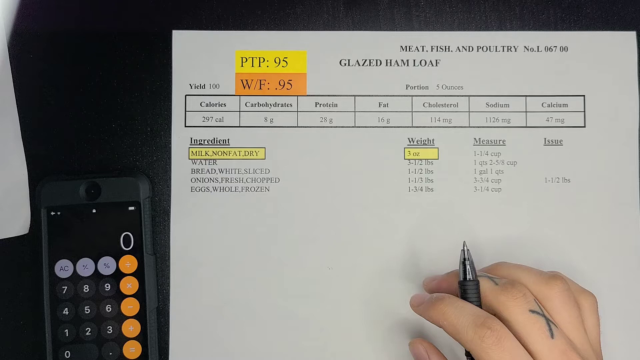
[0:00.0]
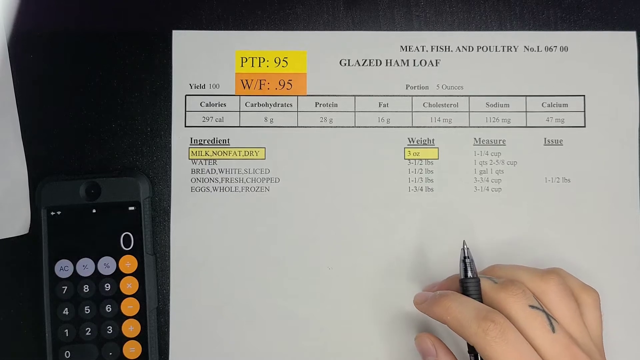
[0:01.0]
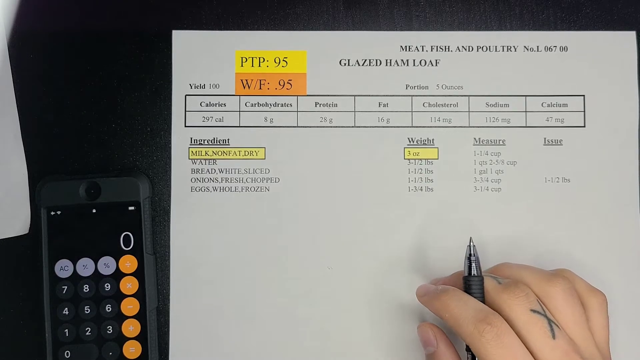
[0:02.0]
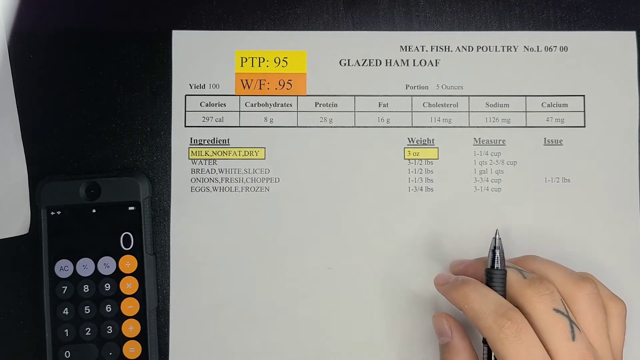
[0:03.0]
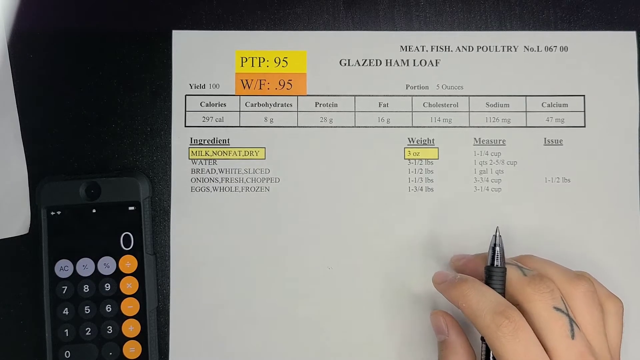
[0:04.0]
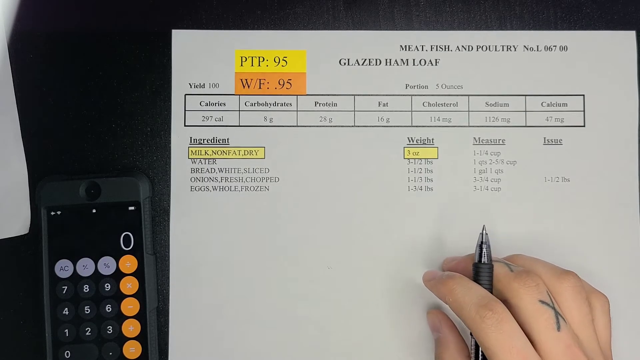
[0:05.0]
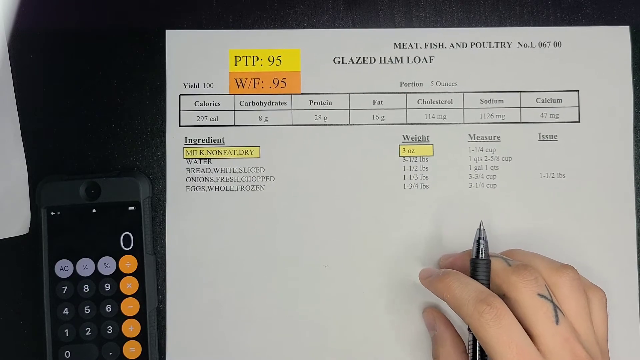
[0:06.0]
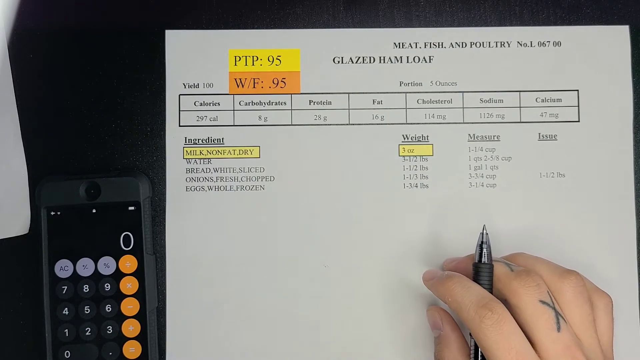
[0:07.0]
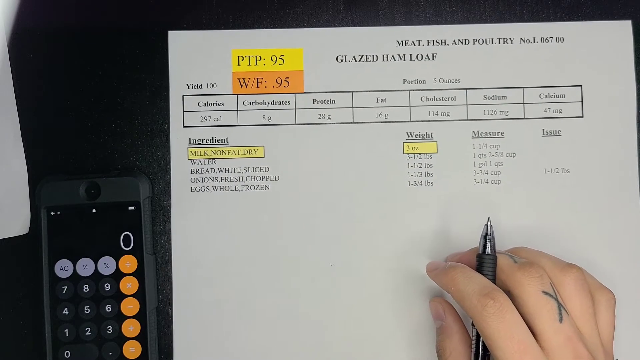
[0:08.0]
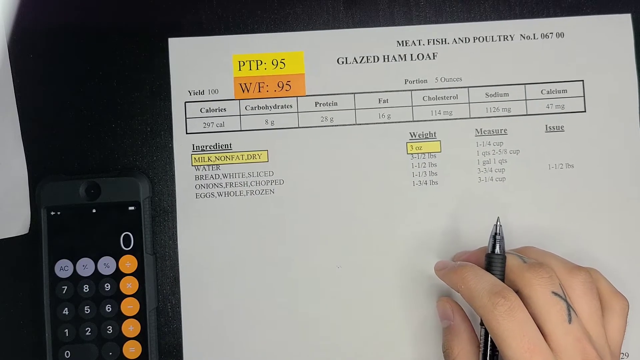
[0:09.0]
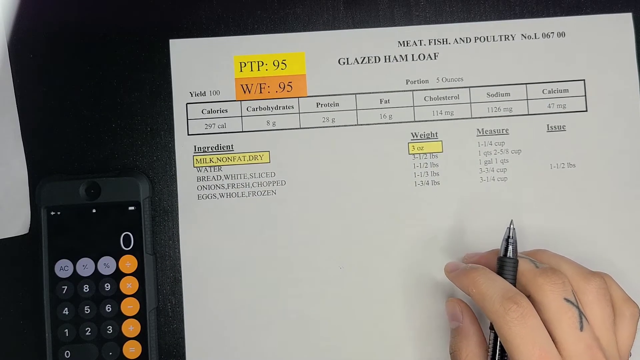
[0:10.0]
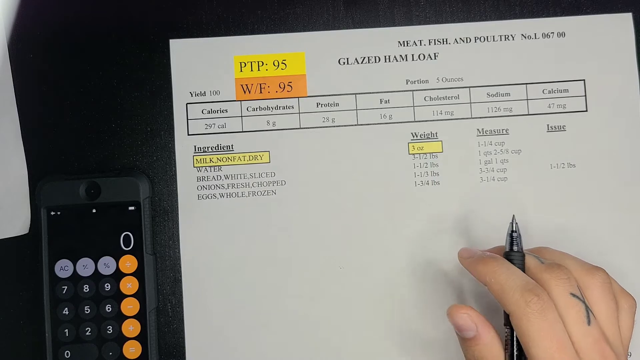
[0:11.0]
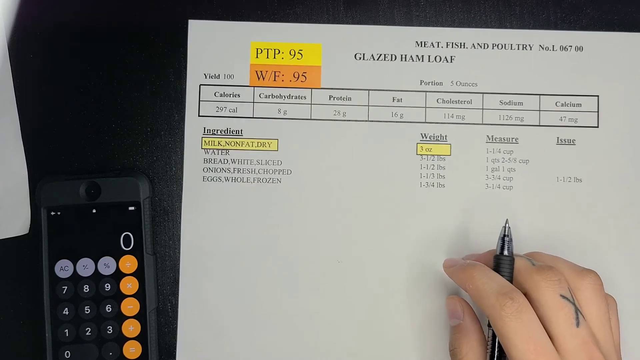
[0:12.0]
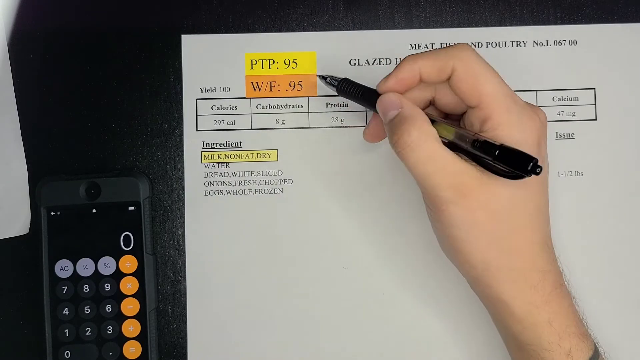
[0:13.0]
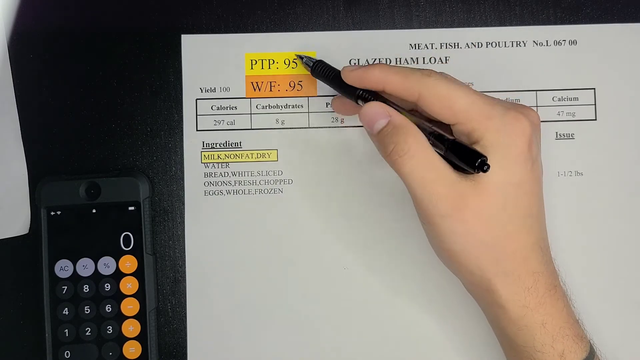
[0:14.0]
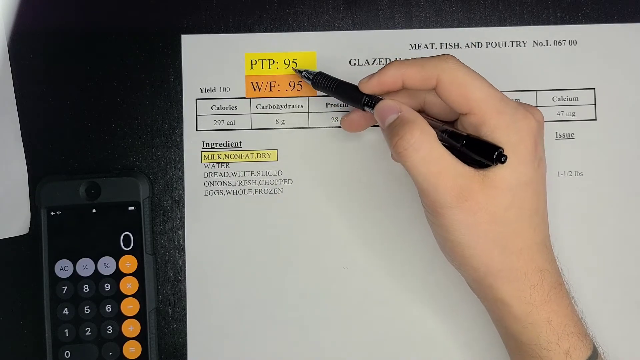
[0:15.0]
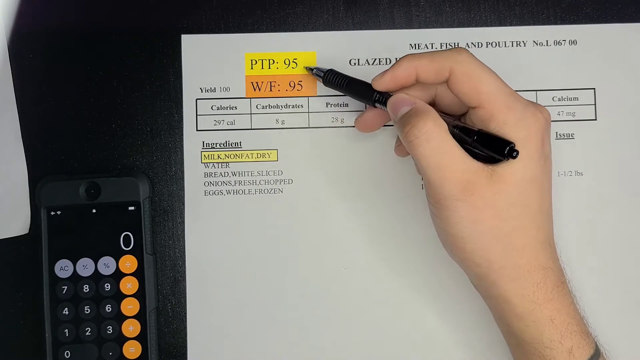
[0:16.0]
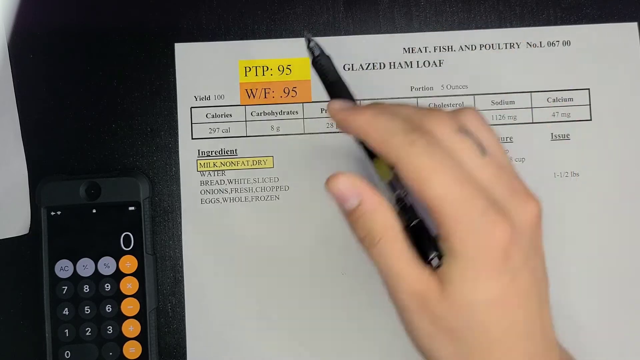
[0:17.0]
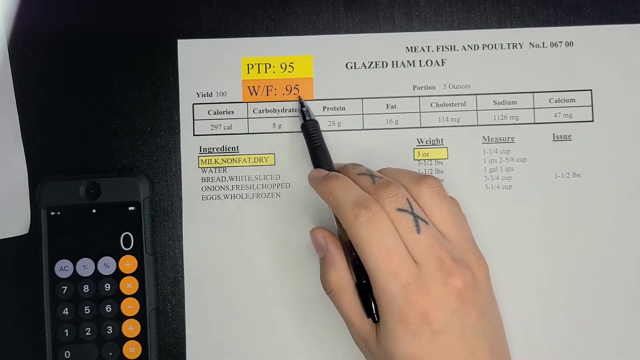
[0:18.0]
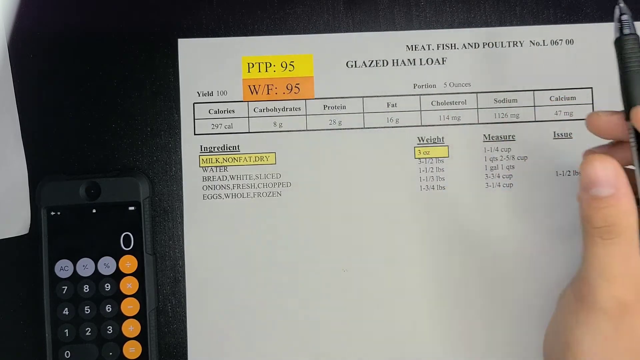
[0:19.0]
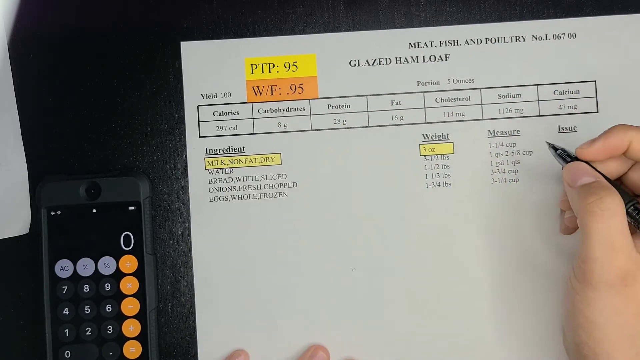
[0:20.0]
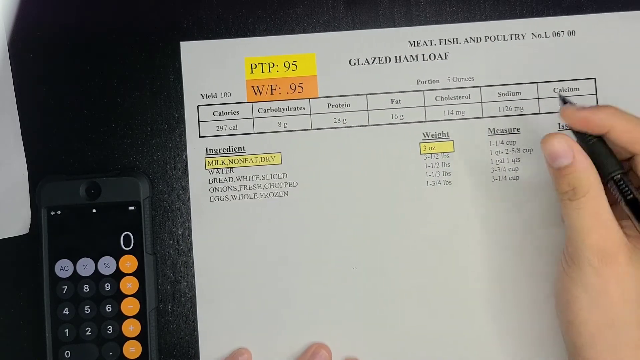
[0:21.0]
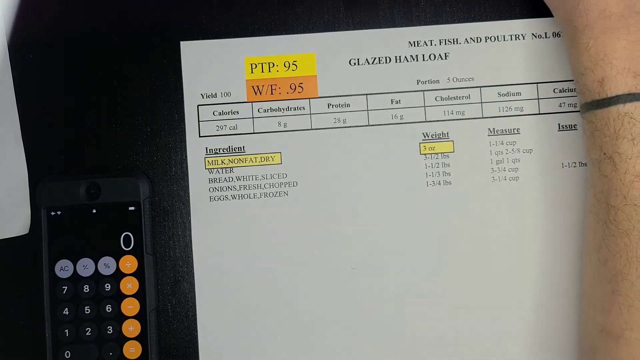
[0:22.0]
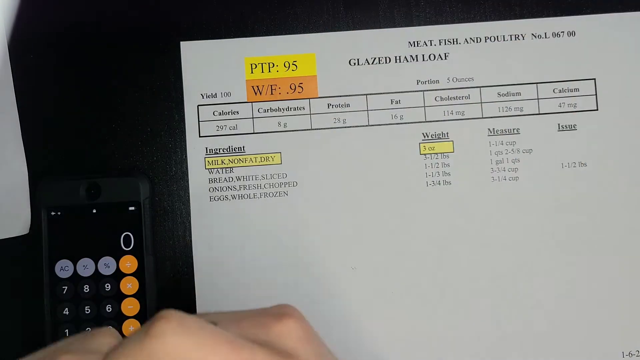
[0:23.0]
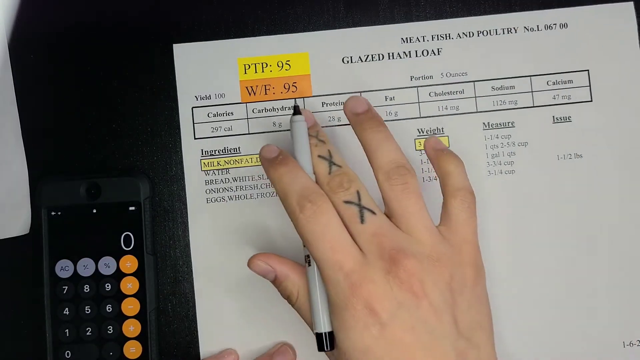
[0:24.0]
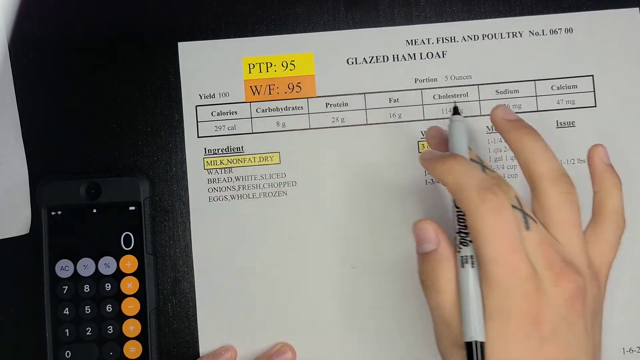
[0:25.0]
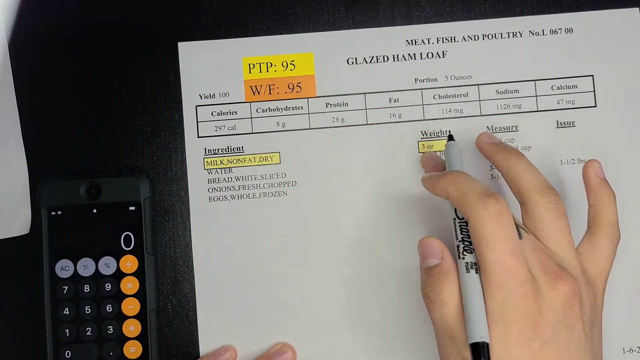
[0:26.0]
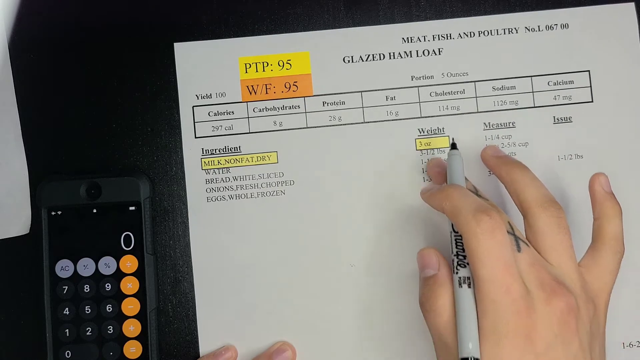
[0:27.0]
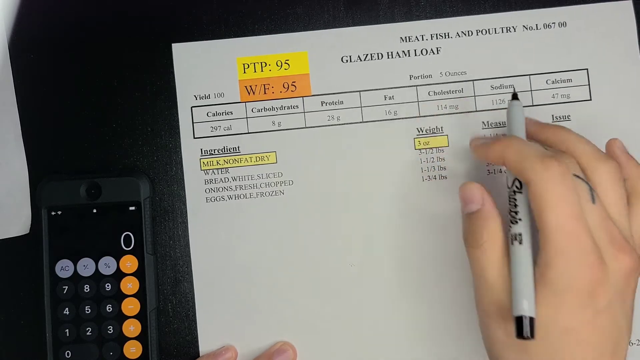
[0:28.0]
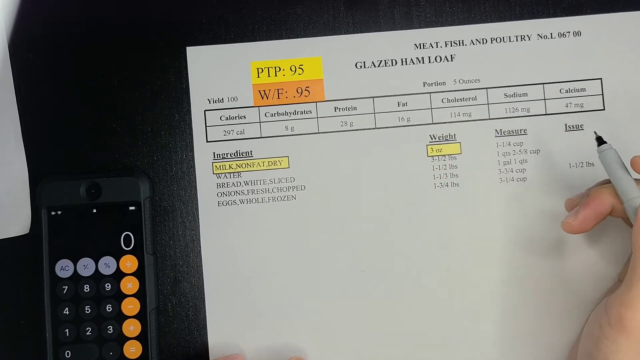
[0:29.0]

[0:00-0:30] A glazed ham loaf recipe from meat, fish and poultry is shown, with a PTP of 95, a W/F of 95, and a yield of 100. A person is writing down the measures and any issues that might arise. It looks like a meat industry journal, with the ingredients printed out: milk, water, bread (white, sliced), onions (freshly chopped), eggs (whole, frozen), and milk (non-fat, dry). The calories are shown as 297, along with the carbohydrates, proteins, fats, cholesterol, sodium and calcium, and the weight of each ingredient, listed step by step with their measurements.